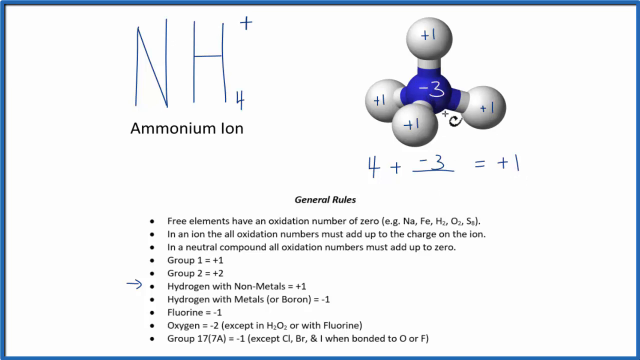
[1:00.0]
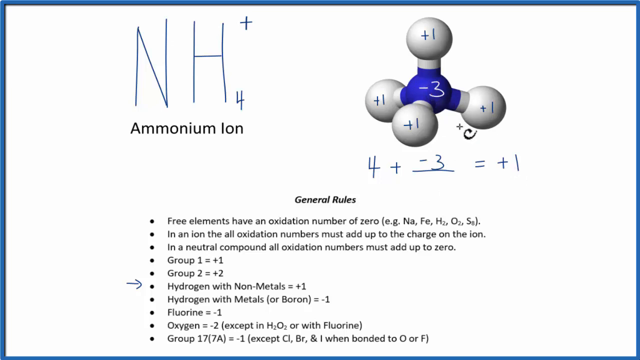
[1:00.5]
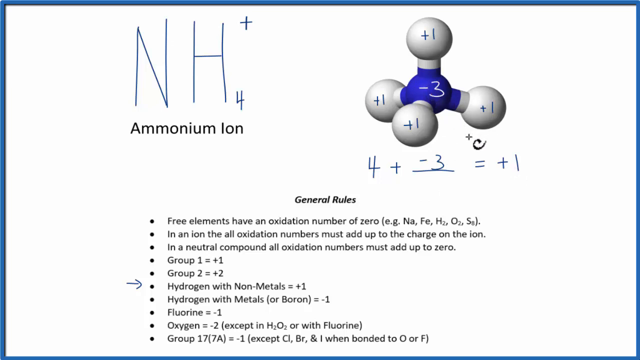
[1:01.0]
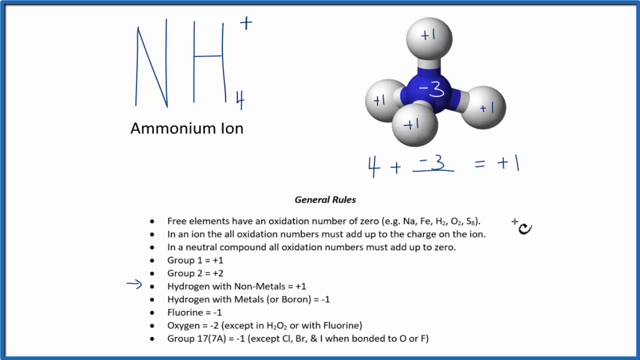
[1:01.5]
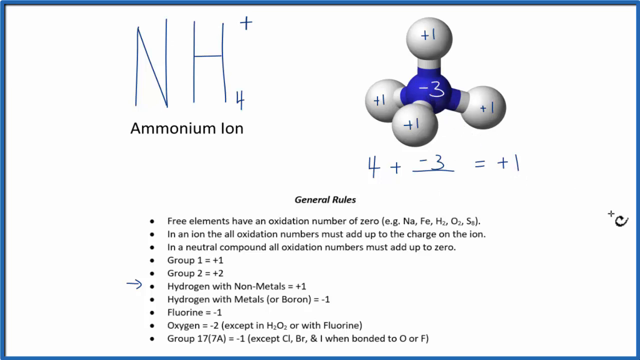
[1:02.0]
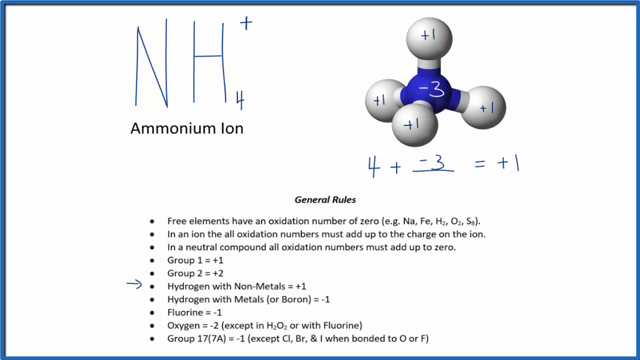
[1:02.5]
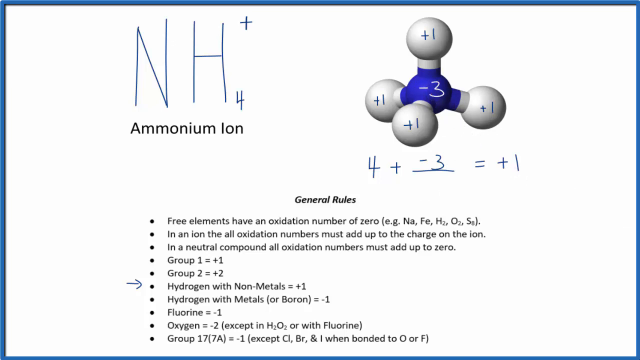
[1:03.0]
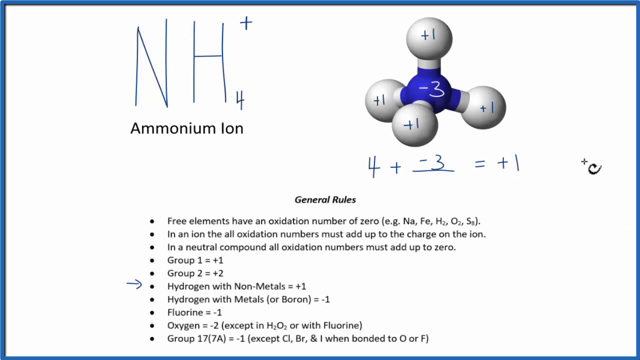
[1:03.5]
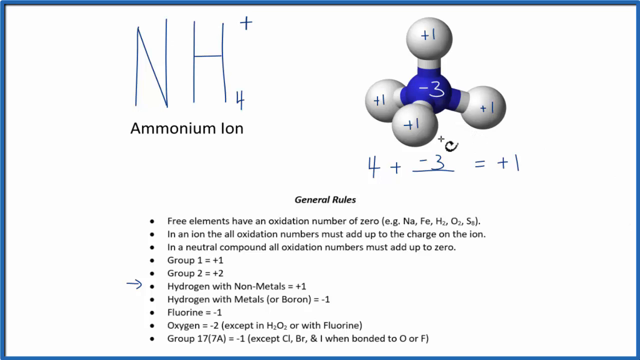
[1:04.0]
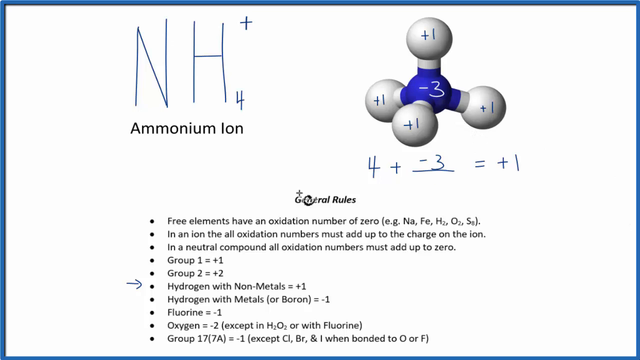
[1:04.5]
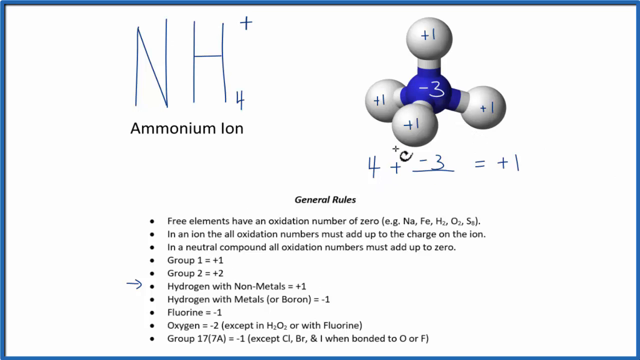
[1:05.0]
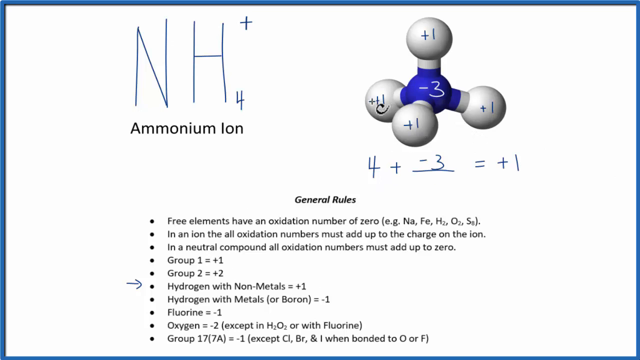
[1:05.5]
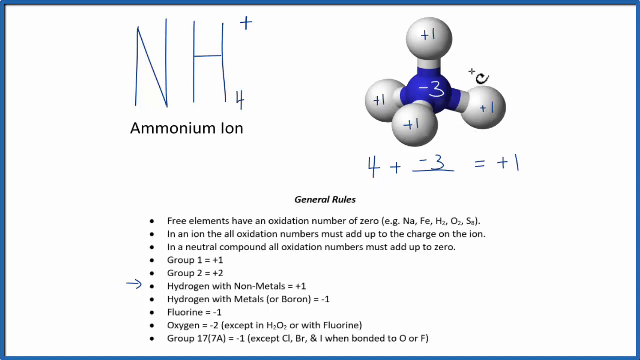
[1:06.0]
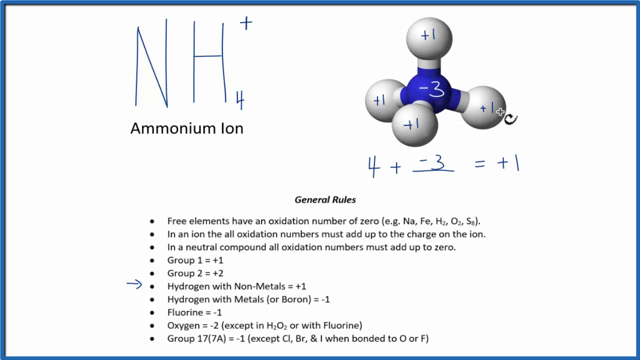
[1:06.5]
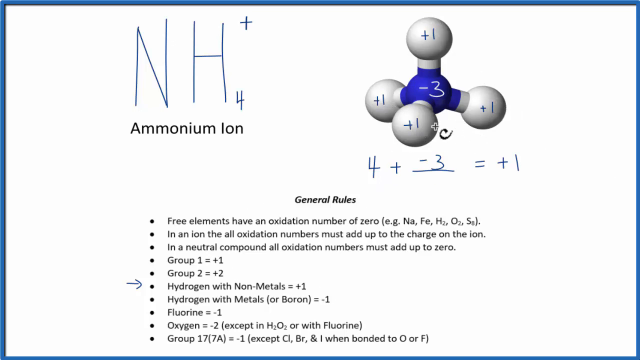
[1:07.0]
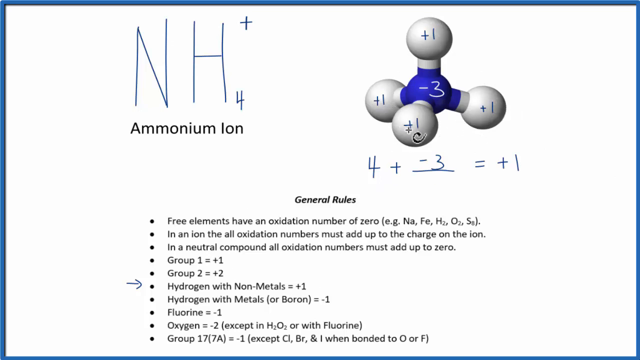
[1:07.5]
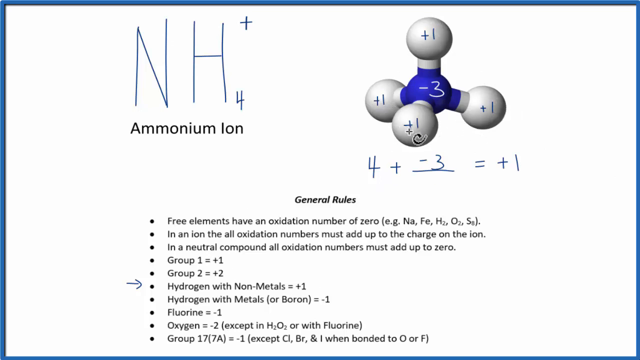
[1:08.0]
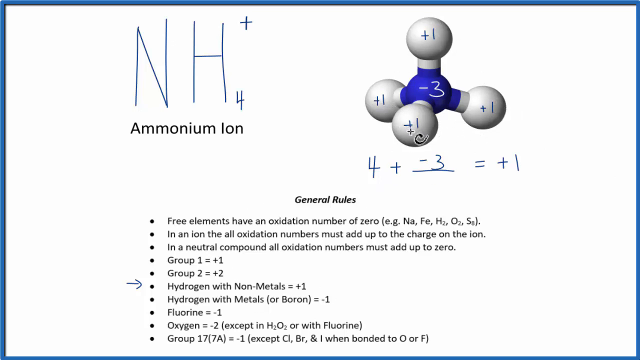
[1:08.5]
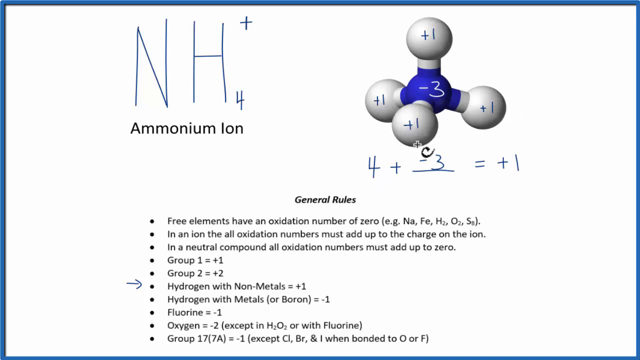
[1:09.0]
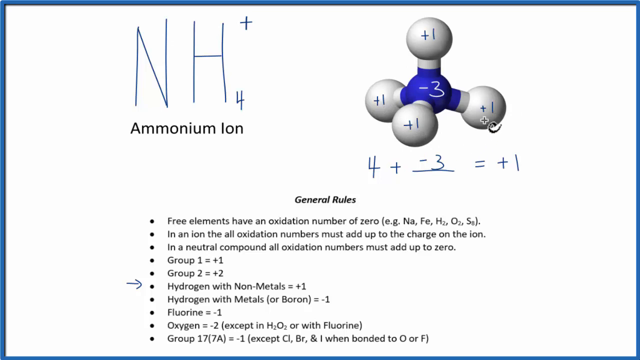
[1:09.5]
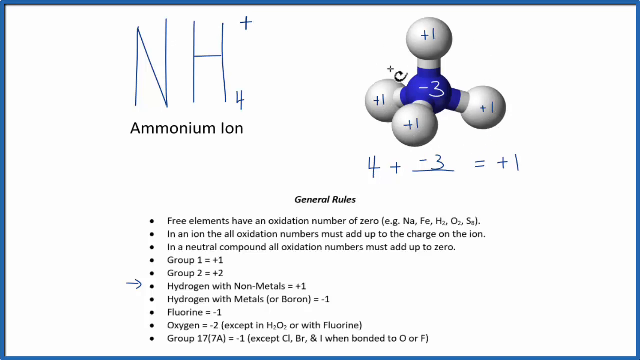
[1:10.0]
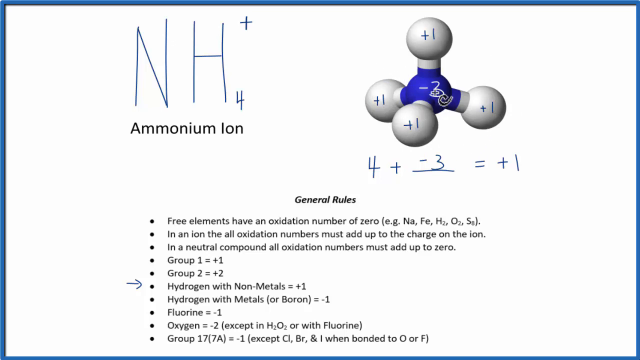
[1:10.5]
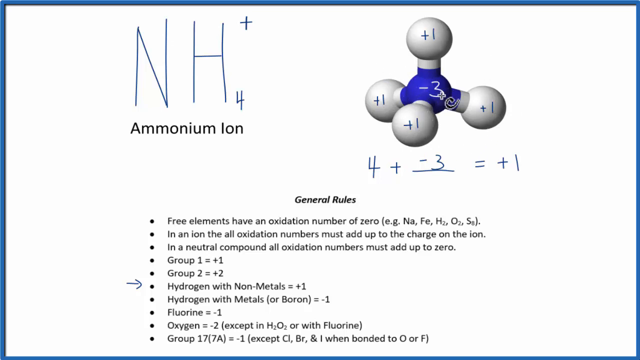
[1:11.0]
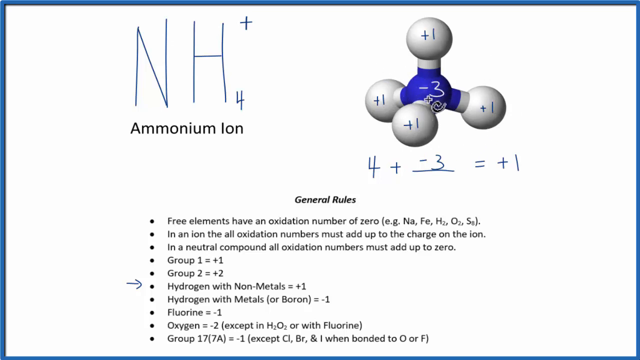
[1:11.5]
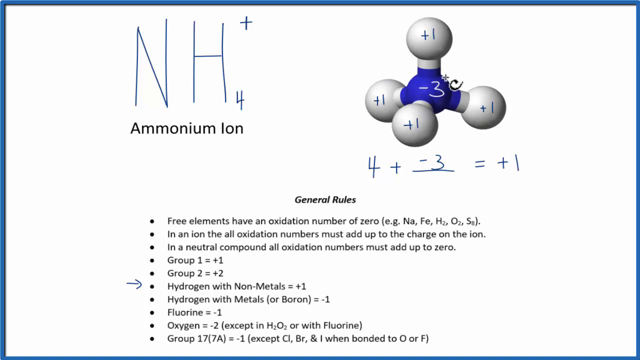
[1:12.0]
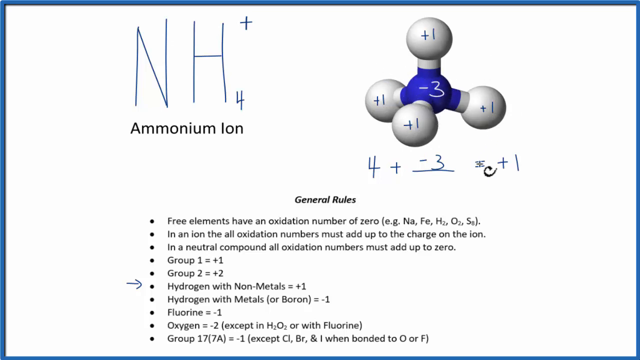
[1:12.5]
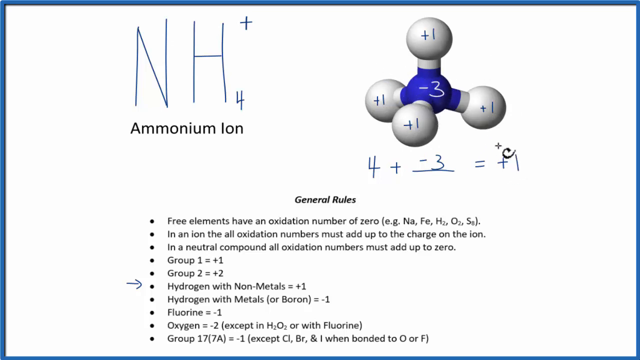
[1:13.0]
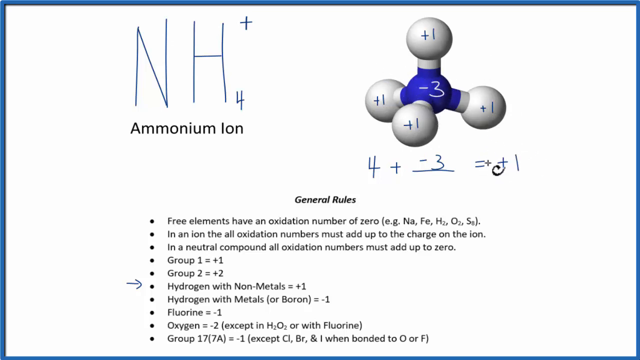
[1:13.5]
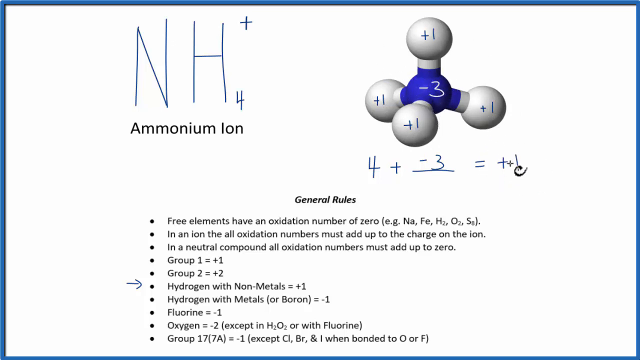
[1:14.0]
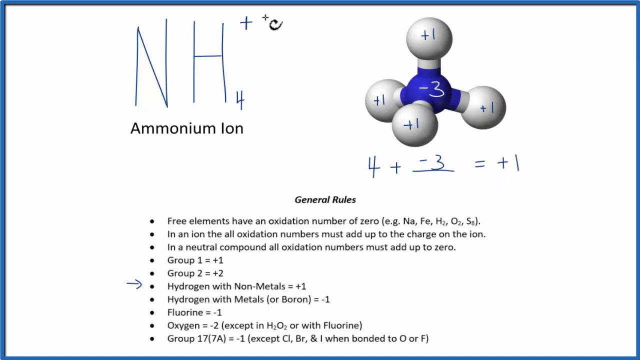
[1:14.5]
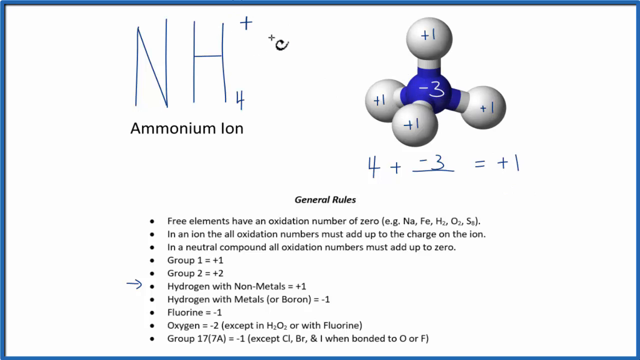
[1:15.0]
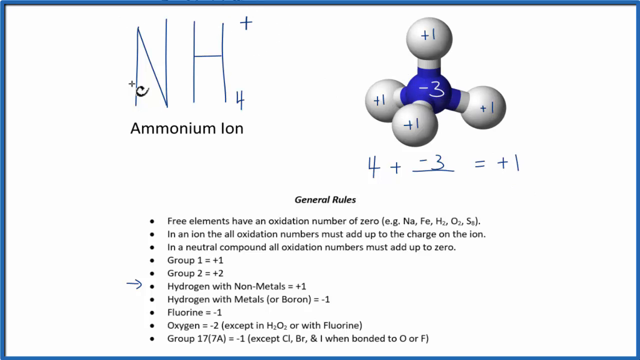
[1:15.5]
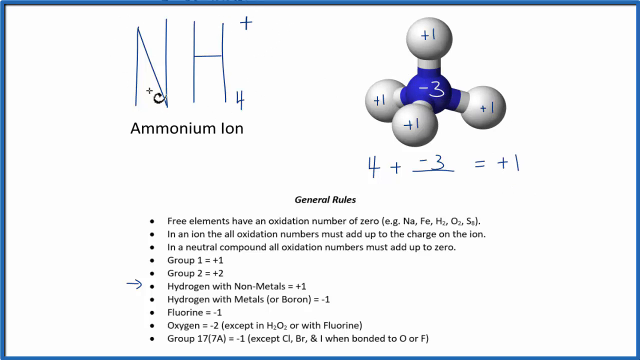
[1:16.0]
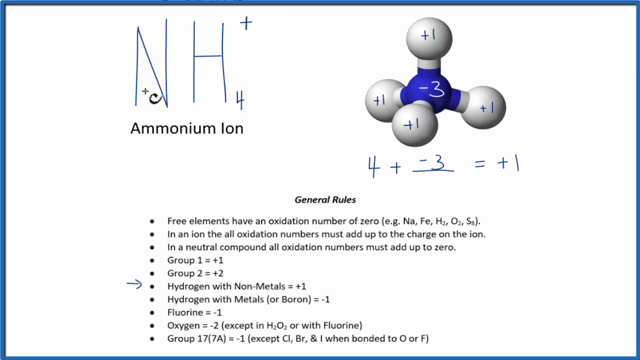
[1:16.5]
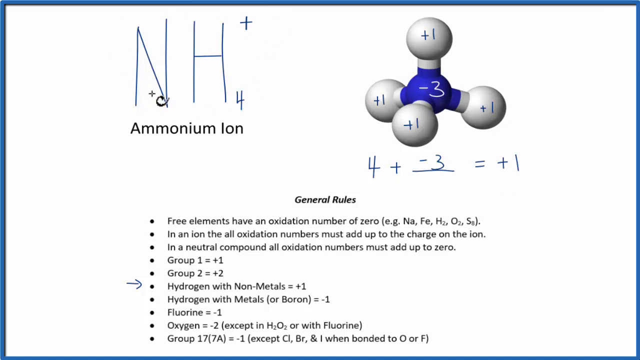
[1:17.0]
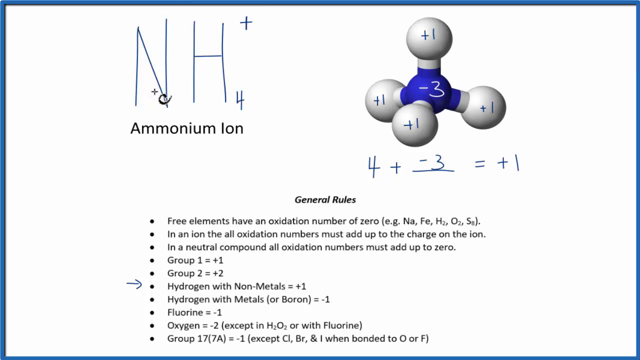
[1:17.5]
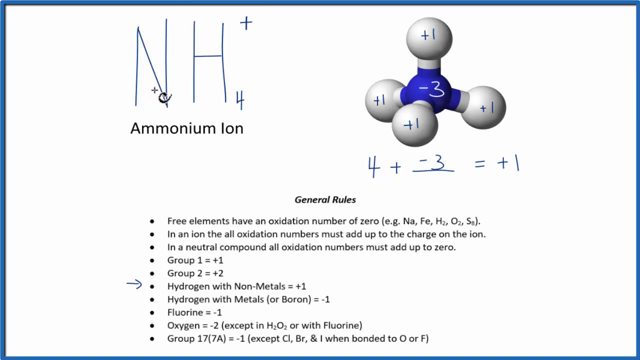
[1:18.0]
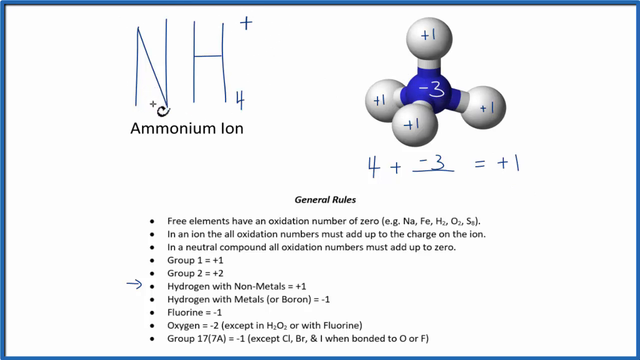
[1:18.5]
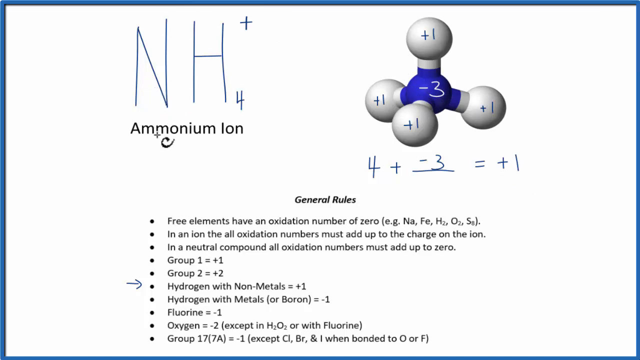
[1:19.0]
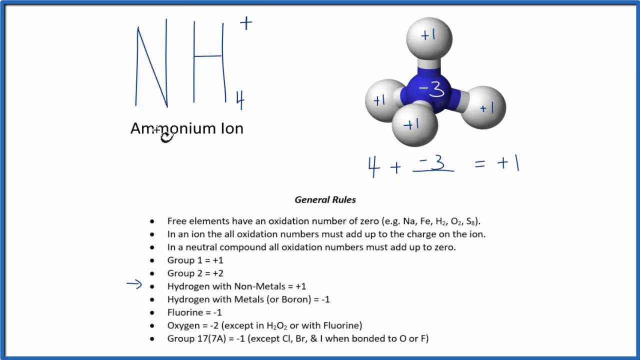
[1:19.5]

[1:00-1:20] The same screen with the ammonium ion NH4 is shown, along with the formula the man painted earlier. The man controlling the mouse points at something, apparently the plus in the NH4 formula.